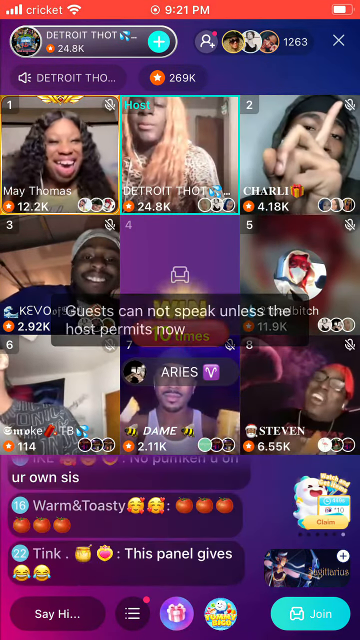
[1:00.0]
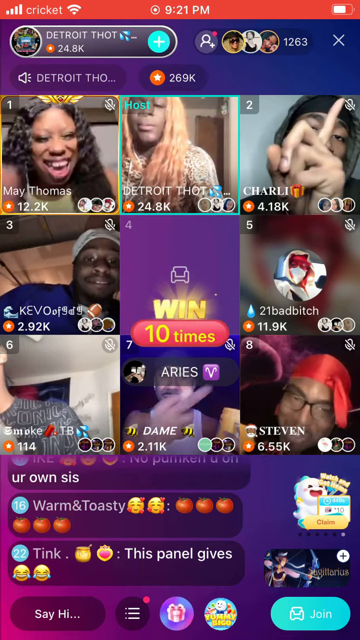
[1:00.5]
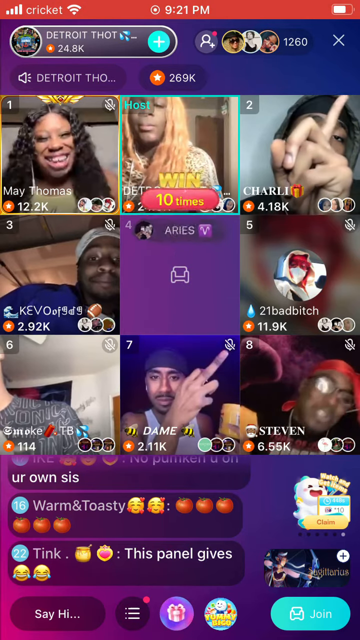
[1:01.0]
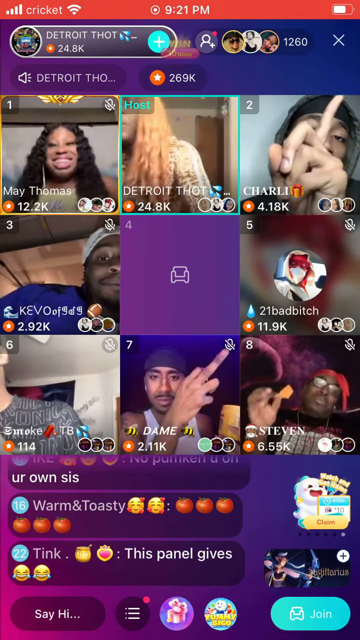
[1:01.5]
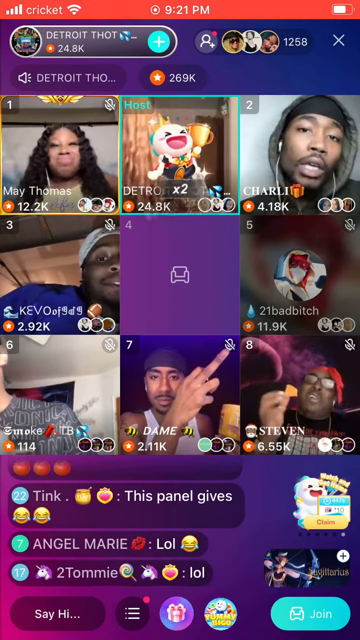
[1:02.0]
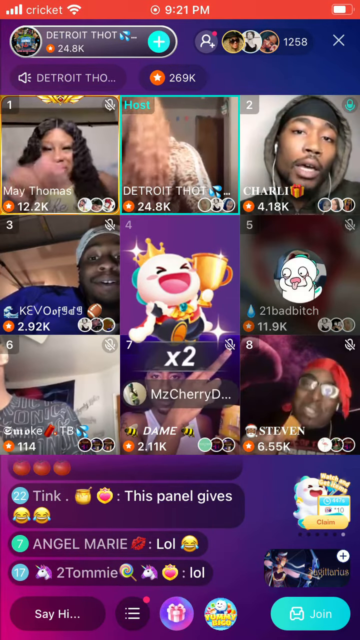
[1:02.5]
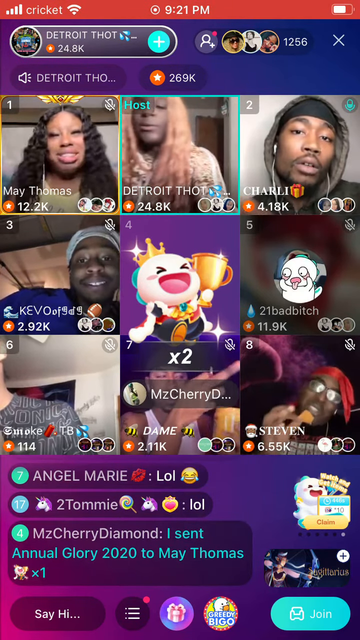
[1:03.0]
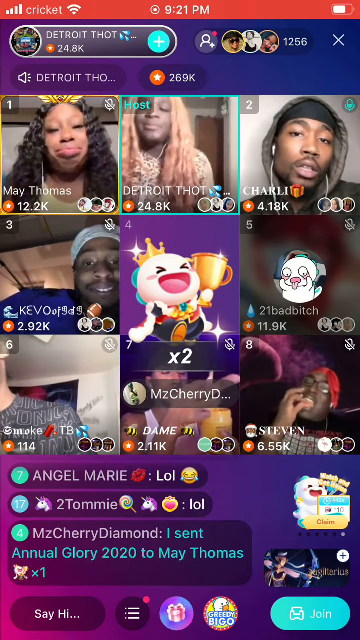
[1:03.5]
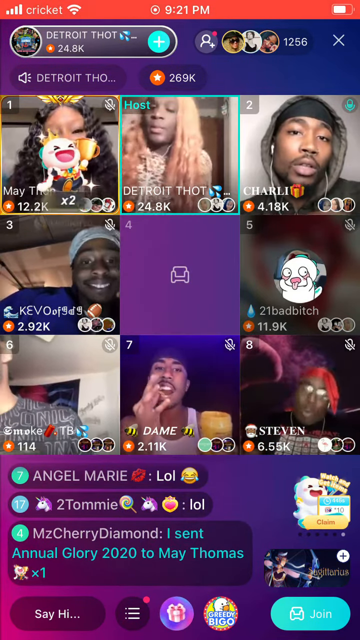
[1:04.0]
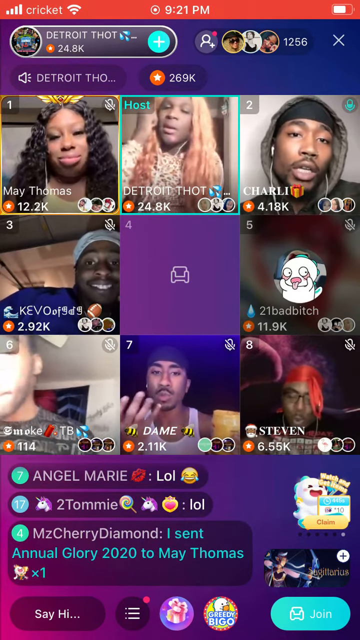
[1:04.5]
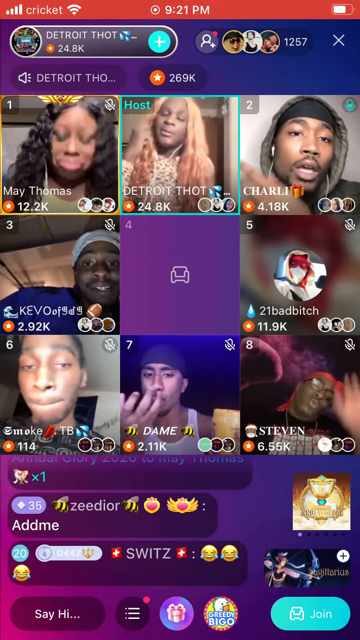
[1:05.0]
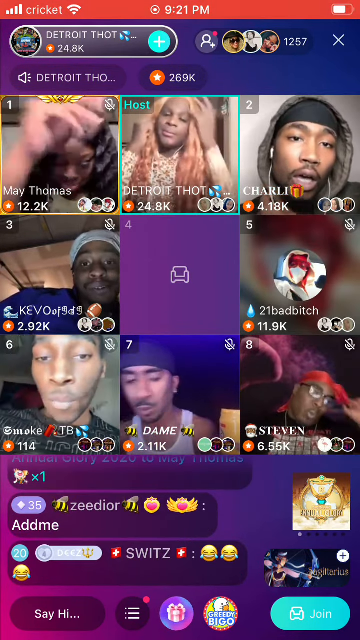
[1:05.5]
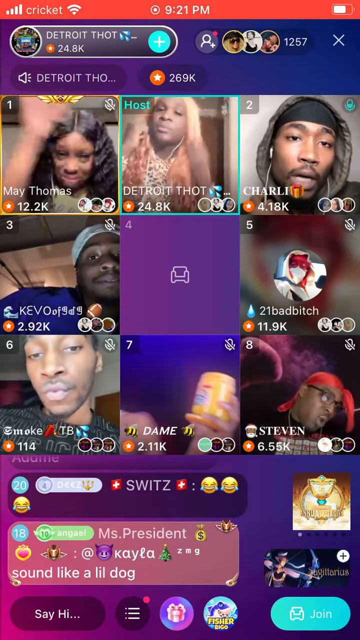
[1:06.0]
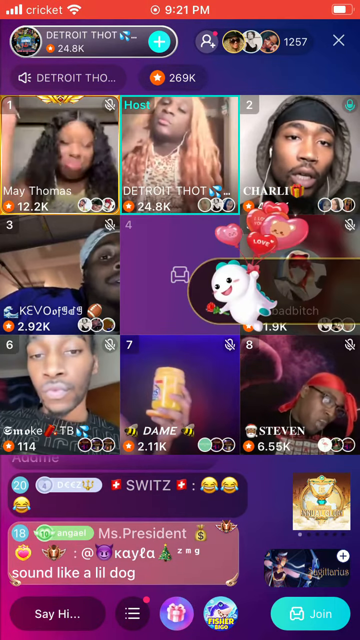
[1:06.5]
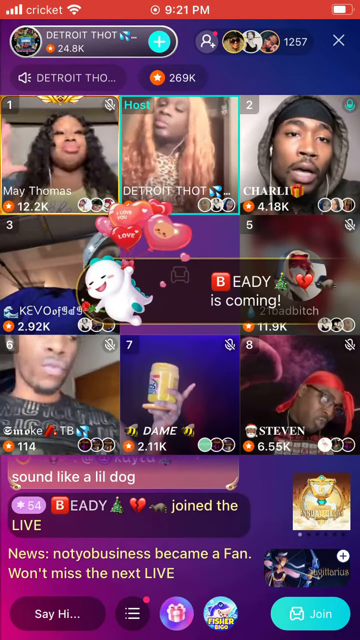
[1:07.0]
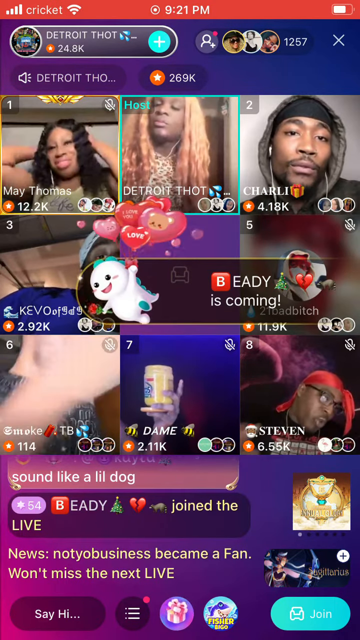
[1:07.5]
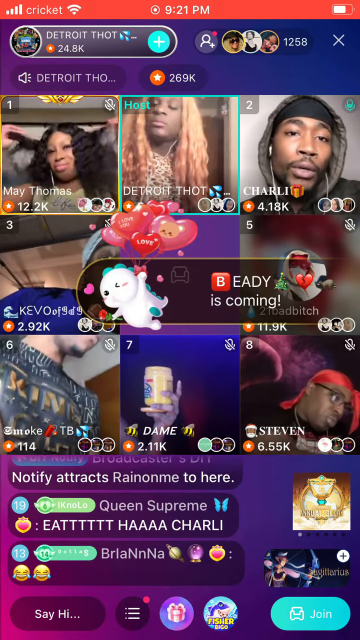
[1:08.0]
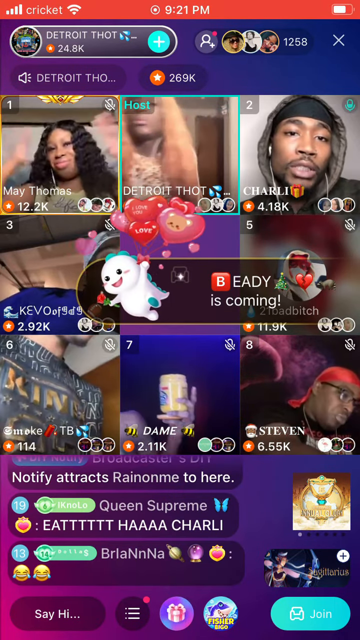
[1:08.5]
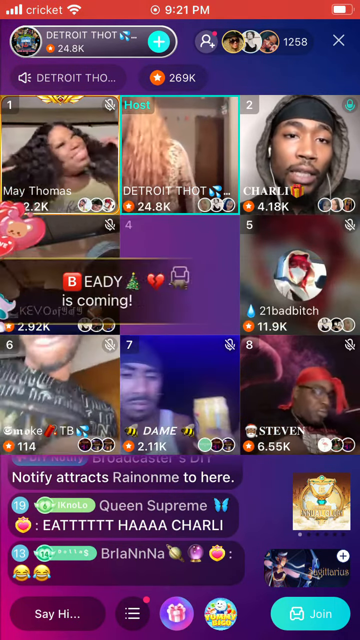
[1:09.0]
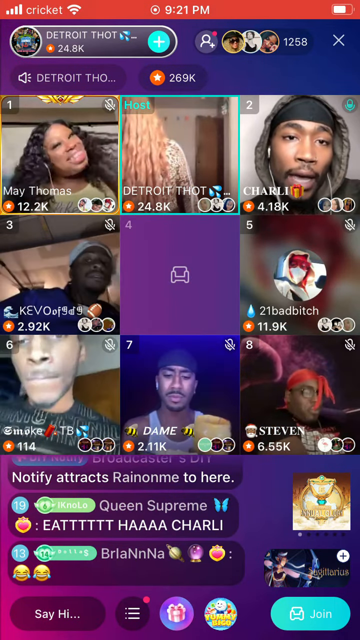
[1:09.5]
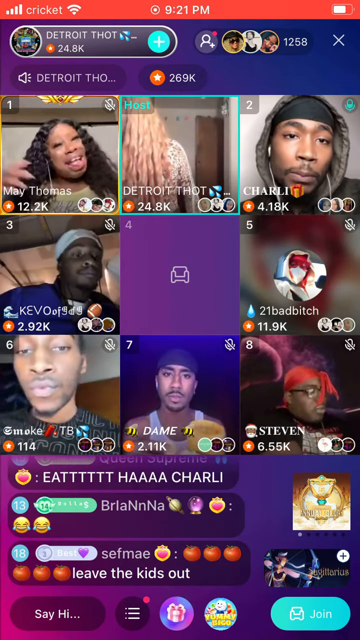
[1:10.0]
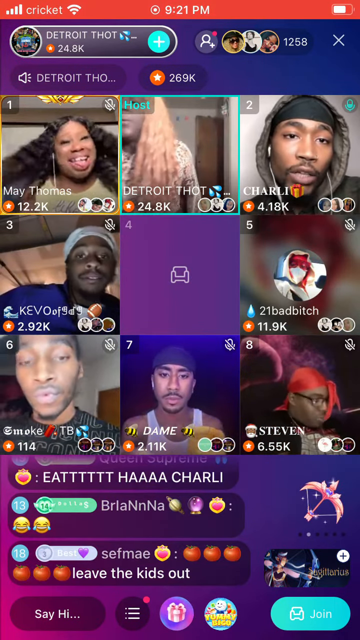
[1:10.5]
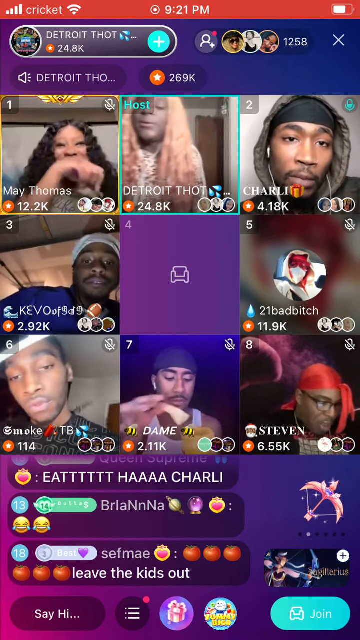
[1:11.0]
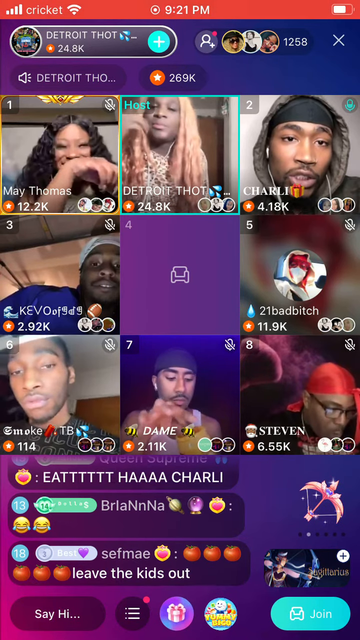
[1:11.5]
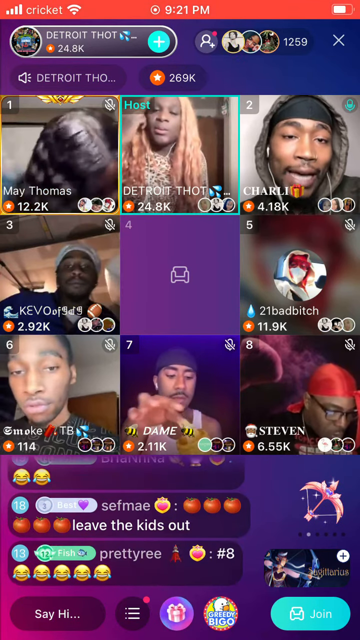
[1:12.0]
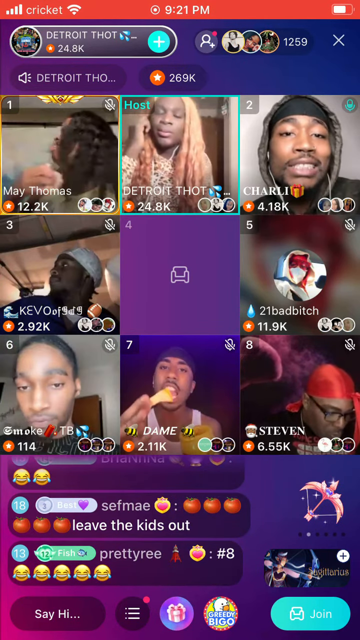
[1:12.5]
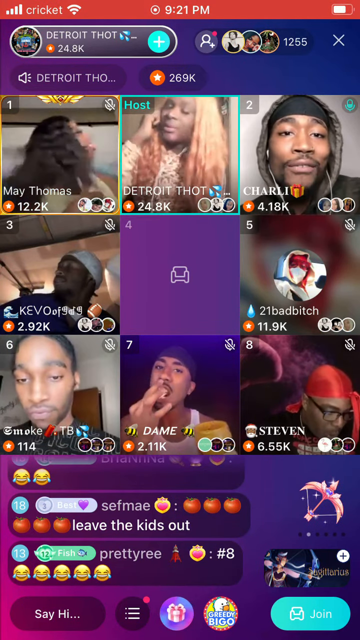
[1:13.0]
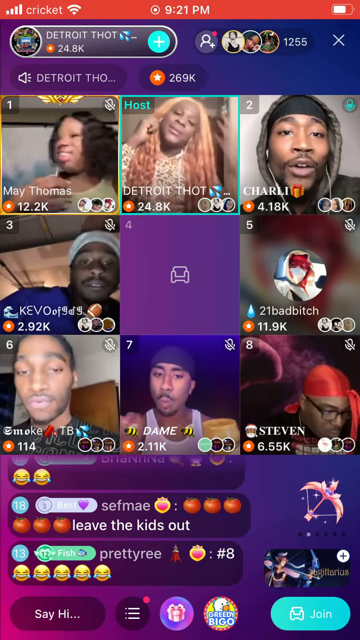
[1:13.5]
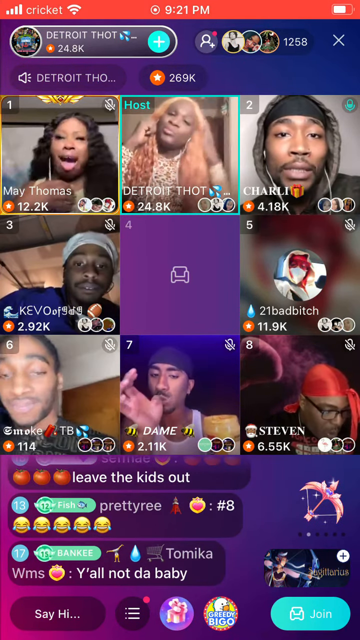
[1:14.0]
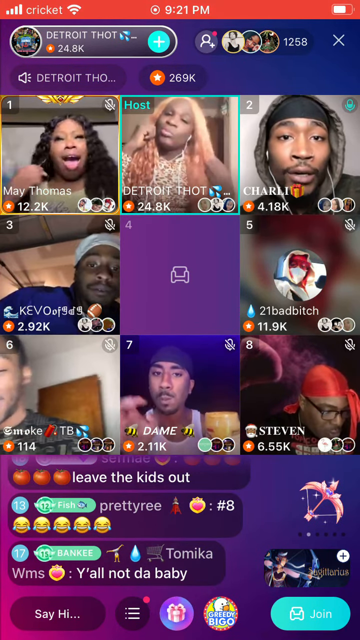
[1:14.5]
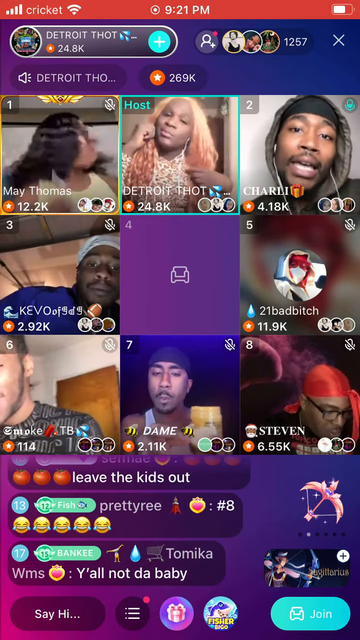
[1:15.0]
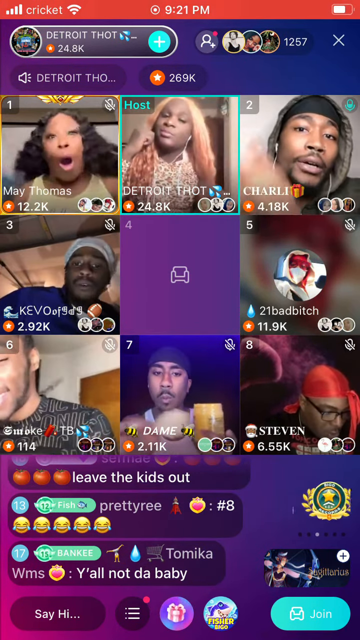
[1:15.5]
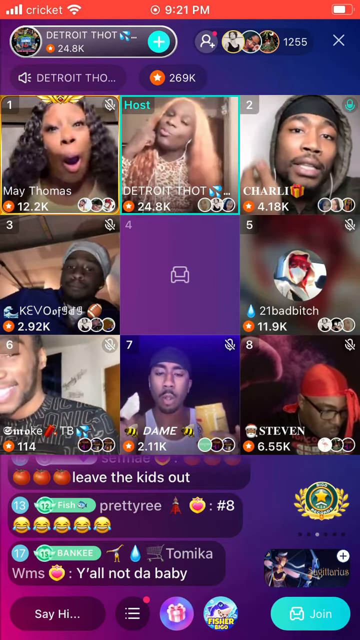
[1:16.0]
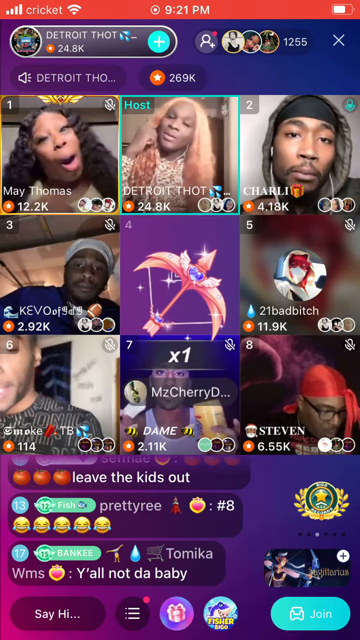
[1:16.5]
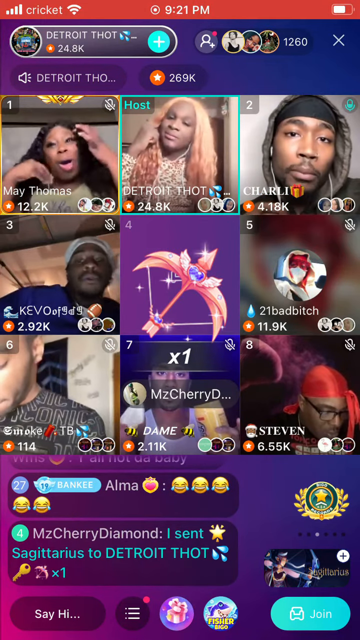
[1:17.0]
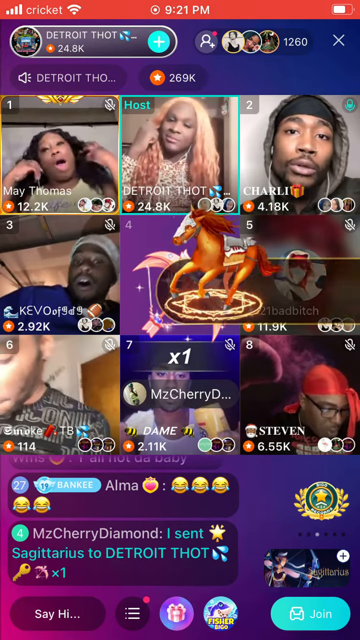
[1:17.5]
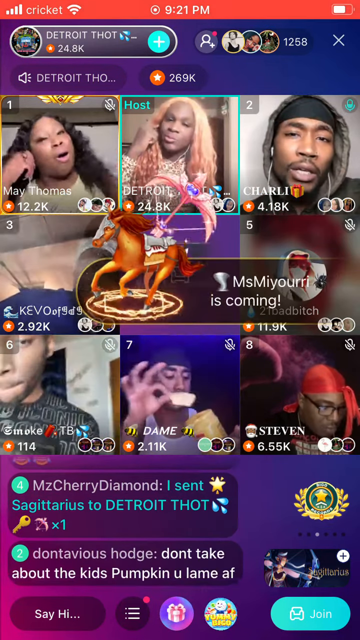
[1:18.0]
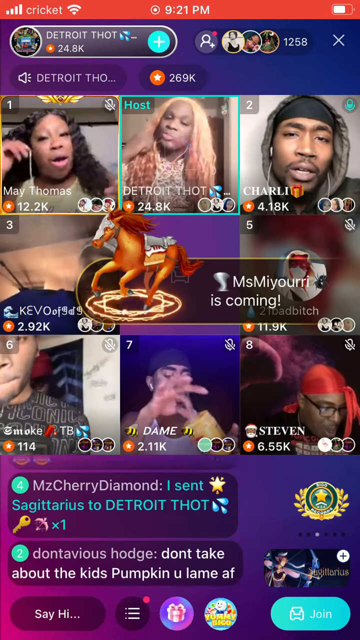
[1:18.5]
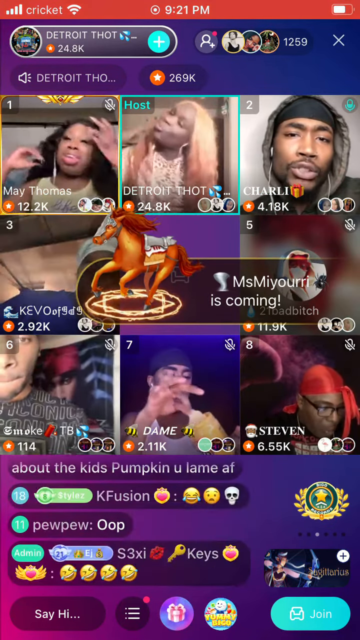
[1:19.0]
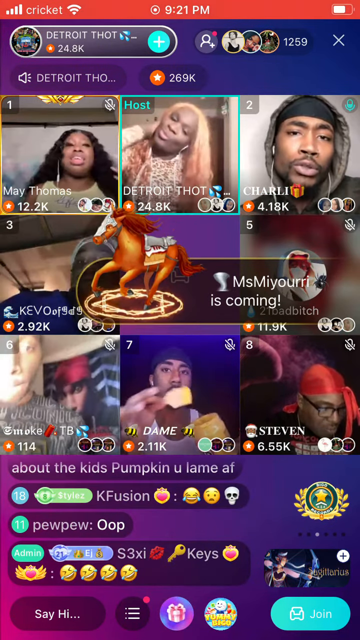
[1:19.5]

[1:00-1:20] The Detroit Thought livestream continues to show the various participants reacting, while logos such as a horse and a pink bow appear along with chat reactions, emoticons, emojis and text in the chat. It looks like a fun and interactive time, with at least seven or eight individuals visible. The setting is a single livestream page, with people moving around in their individual webcams.